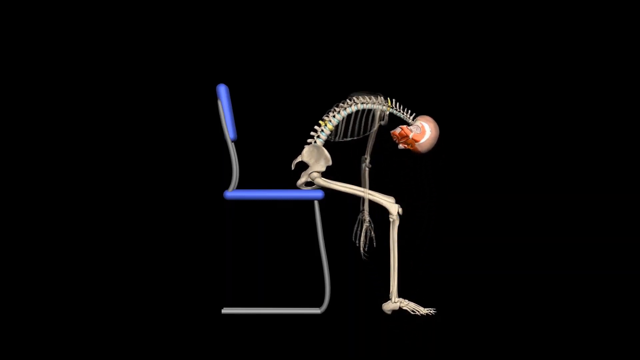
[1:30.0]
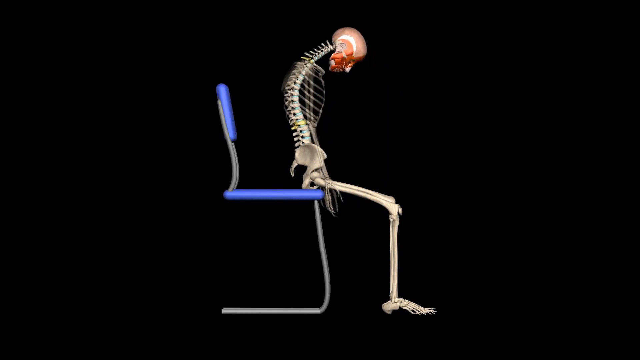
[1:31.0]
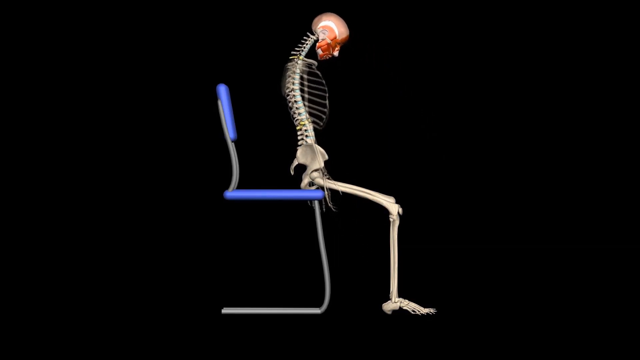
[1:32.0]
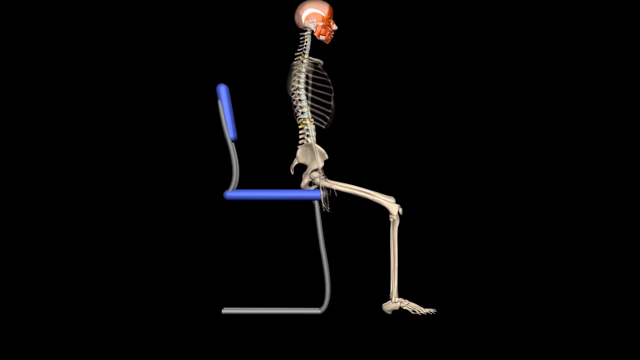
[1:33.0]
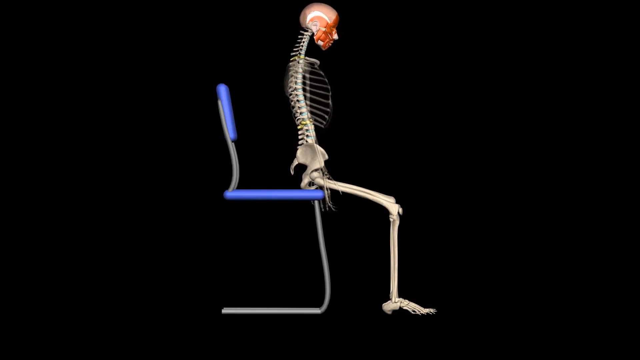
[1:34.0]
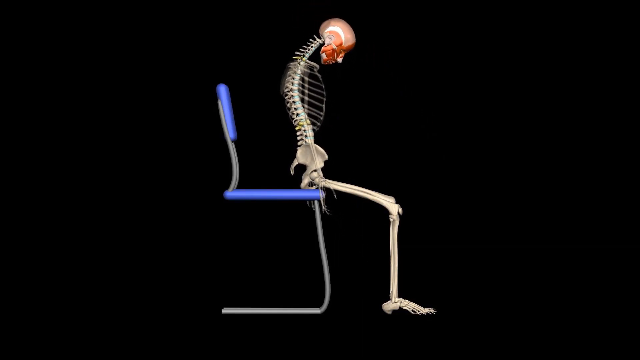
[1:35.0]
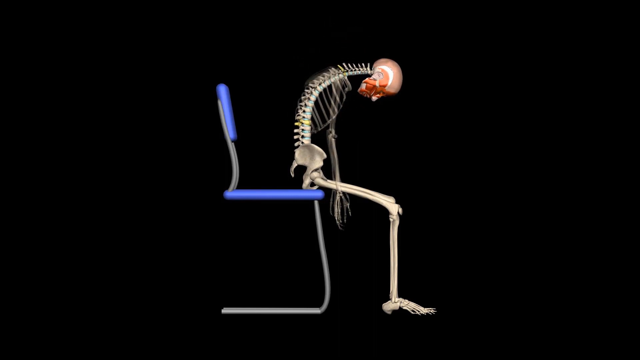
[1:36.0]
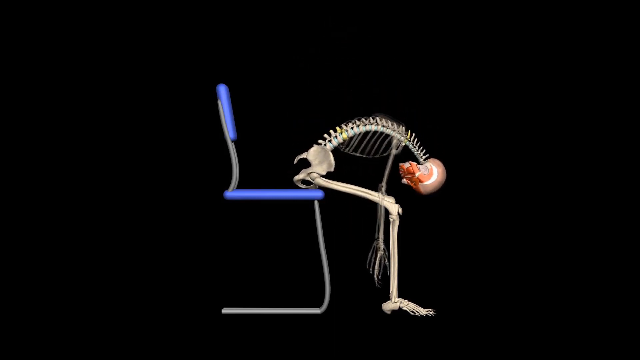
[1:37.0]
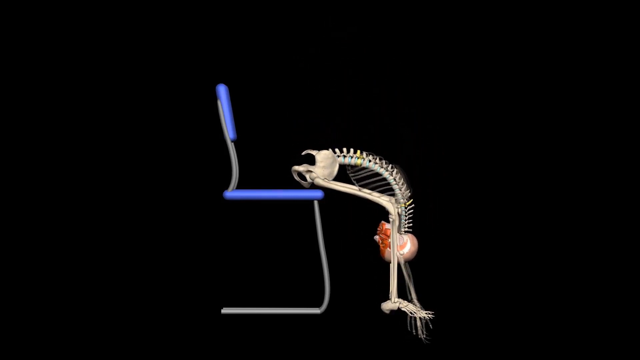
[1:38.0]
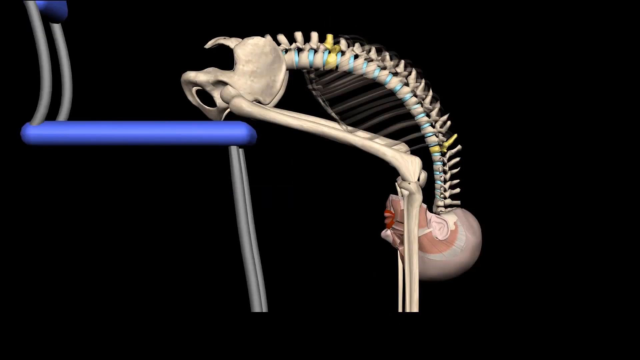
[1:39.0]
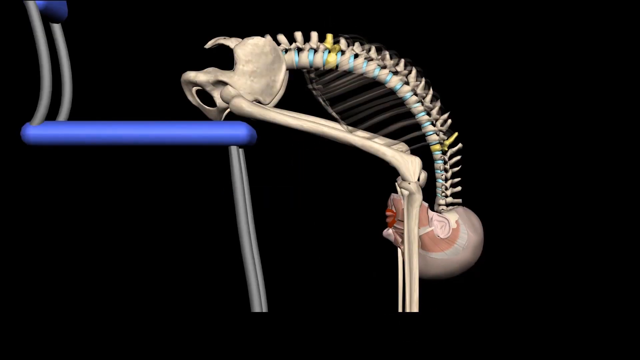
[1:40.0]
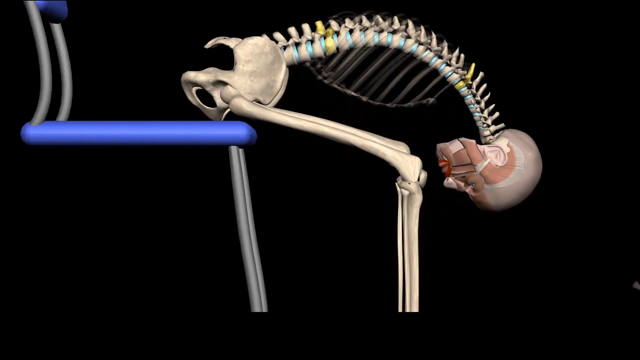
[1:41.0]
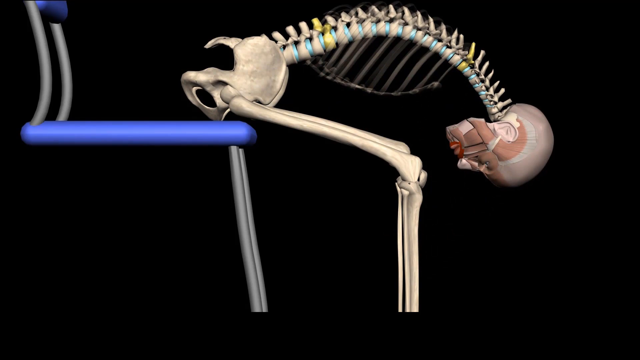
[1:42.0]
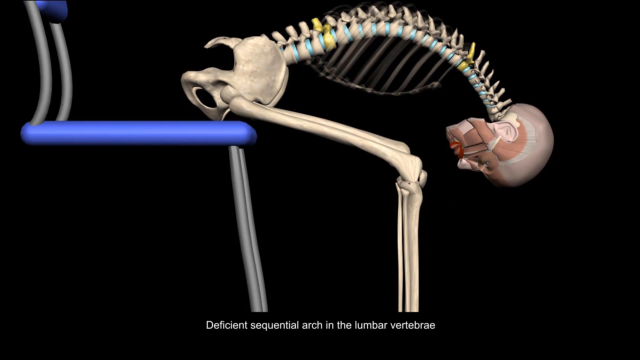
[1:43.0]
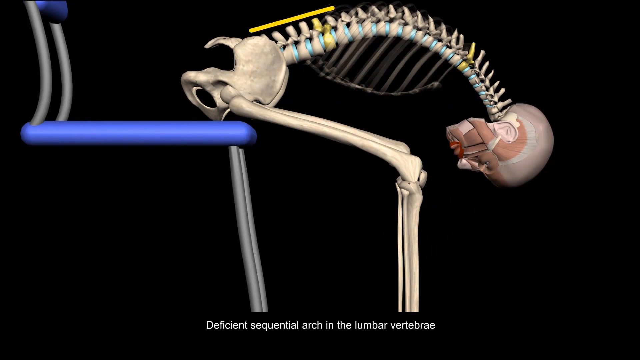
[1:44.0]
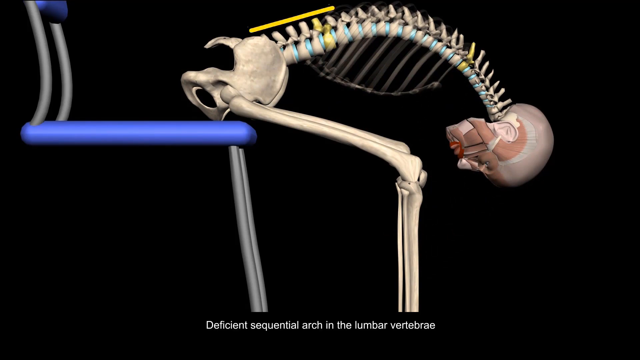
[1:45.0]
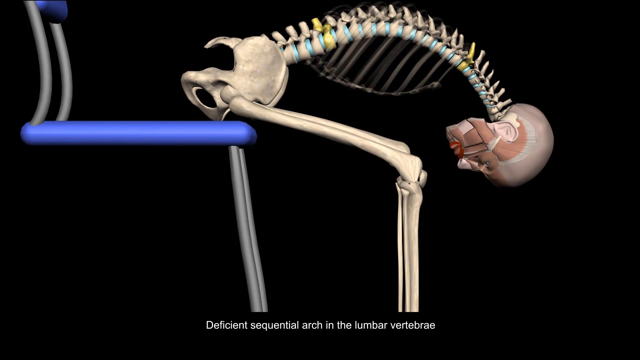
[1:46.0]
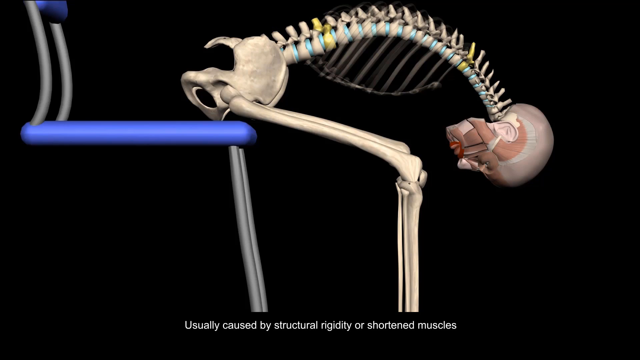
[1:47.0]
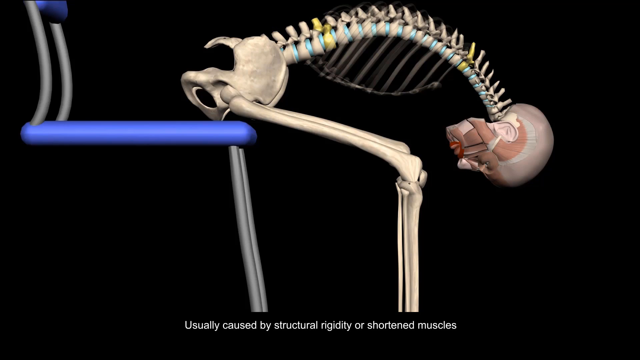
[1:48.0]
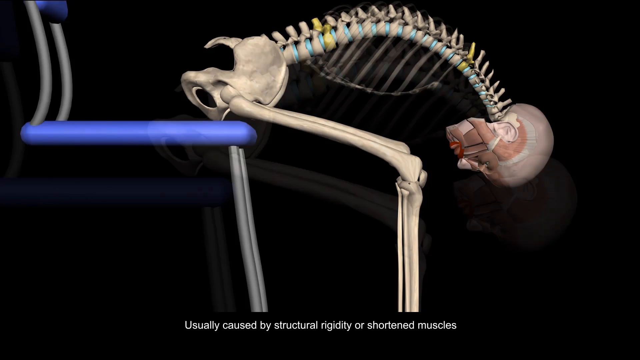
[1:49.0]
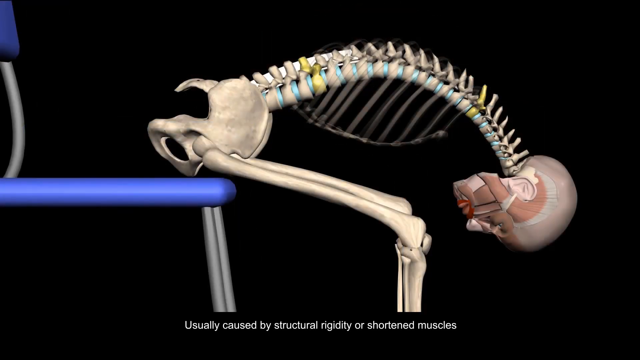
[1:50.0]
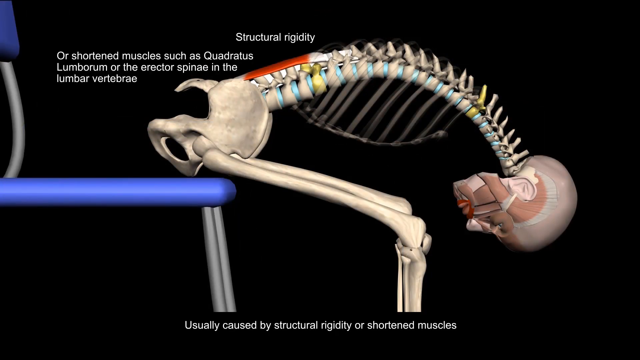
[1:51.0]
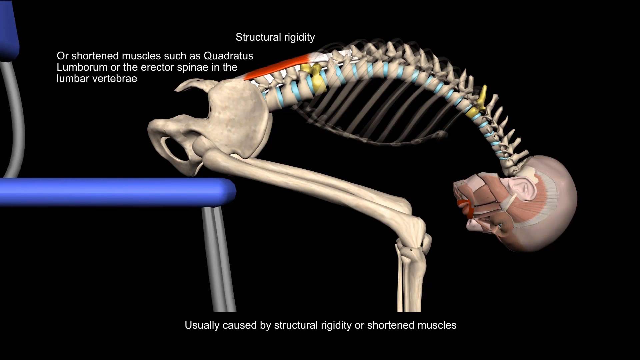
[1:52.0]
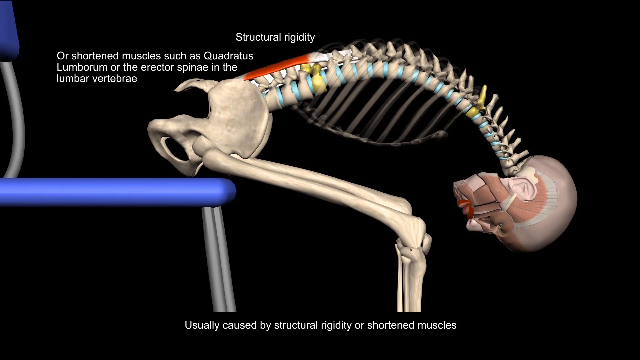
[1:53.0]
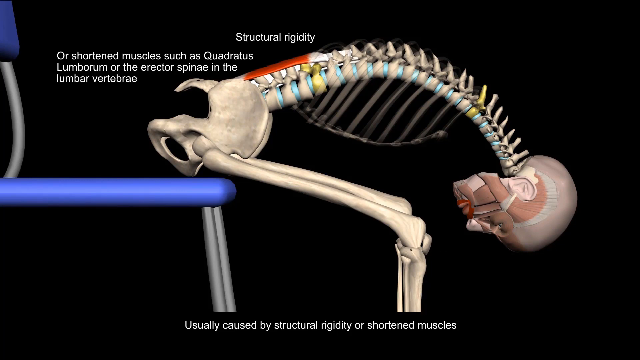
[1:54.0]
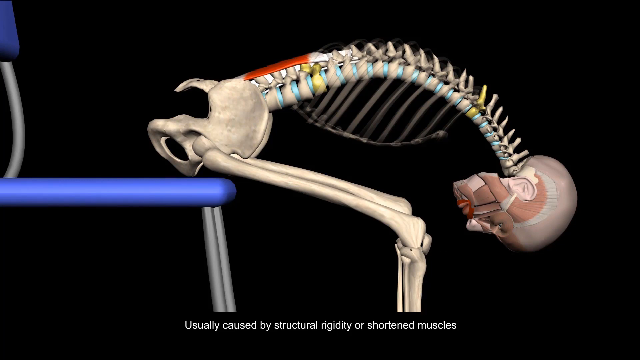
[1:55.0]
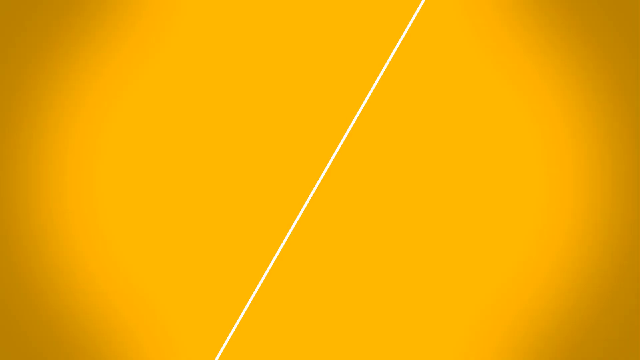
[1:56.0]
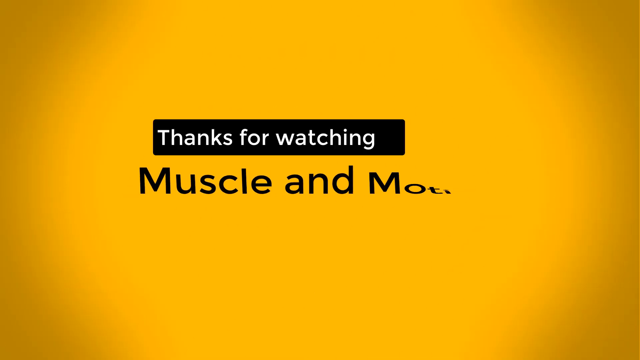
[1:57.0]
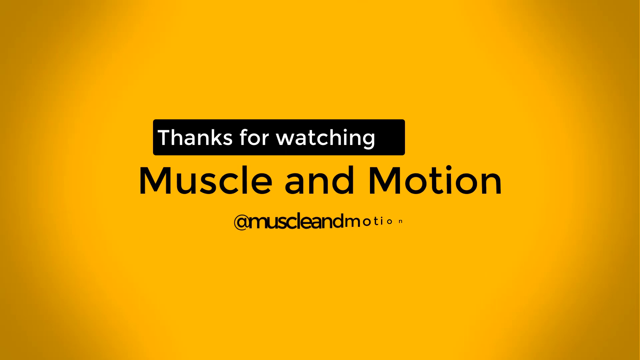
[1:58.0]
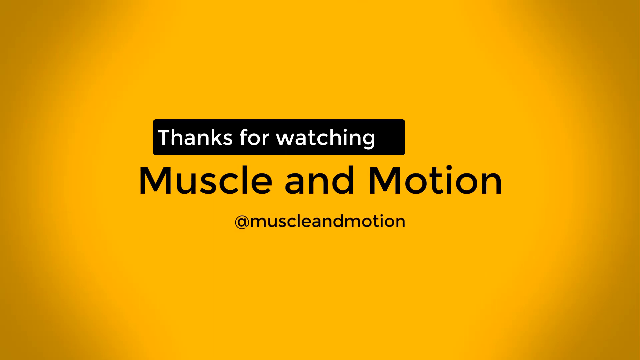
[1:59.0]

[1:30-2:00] A computer-generated 3D skeleton sits in a chair, with its white bones visible, including the spine, pelvis, ribcage, arm bones and leg bones, and pink and red muscle depicted on the skull. It sits on the very edge of a chair with gray legs and blue cushions against a plain black background. It sits back upright and lifts its head, then lowers its head again and places its face between its legs with its arms dangling downward. A close-up shot follows, with some of the spinal cord areas outlined in blue and yellow and the muscles on the skull visible. The skeleton starts to lift its head again. White text describing the action appears at the bottom of the screen, and the skeleton's arms are not visible in this scene. The skeleton holds the position, then a yellow line appears next to the spine in the back. Another shot shows the skeleton bent over, more small white text appears, and part of the spine is outlined in orange while the skeleton stays still. At the end, text reads "thanks for watching Muscle in Motion" with a yellow background behind it.